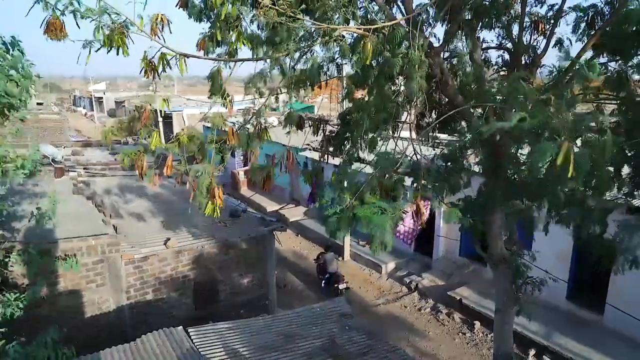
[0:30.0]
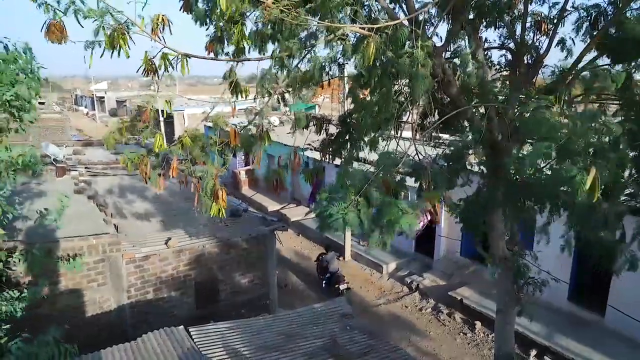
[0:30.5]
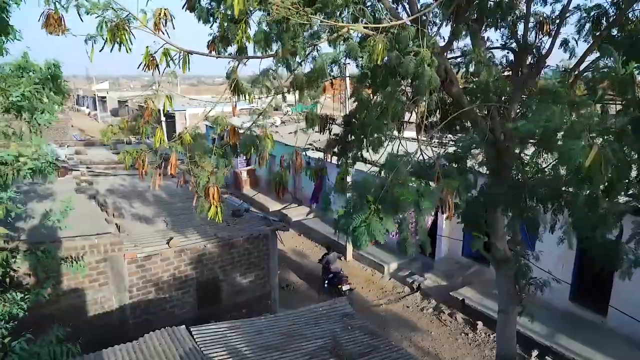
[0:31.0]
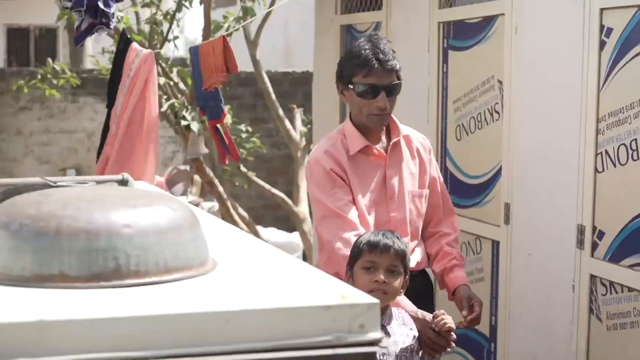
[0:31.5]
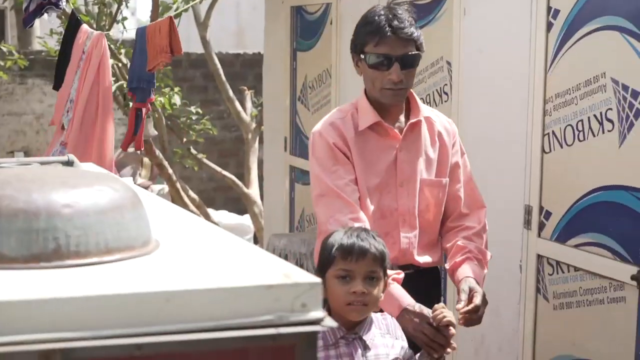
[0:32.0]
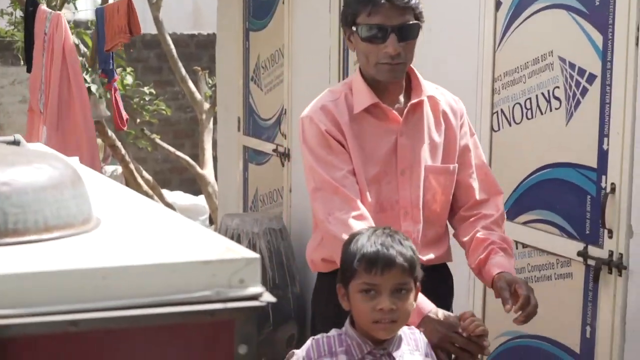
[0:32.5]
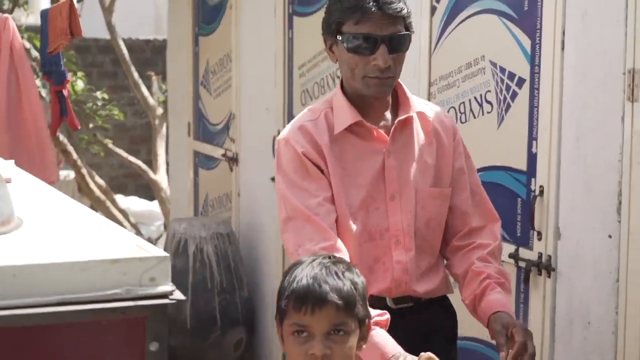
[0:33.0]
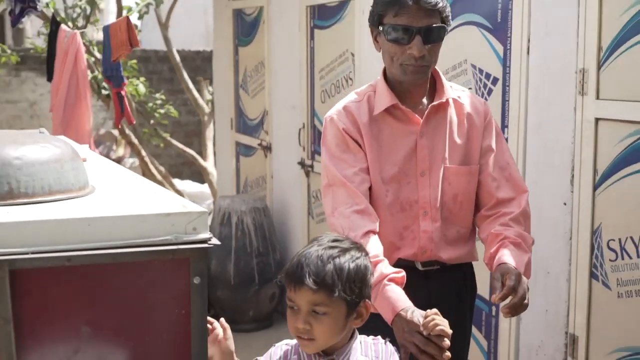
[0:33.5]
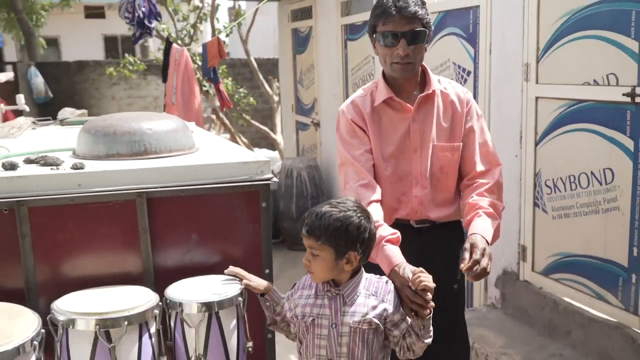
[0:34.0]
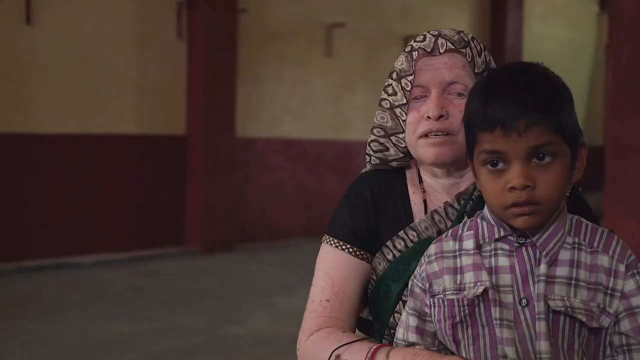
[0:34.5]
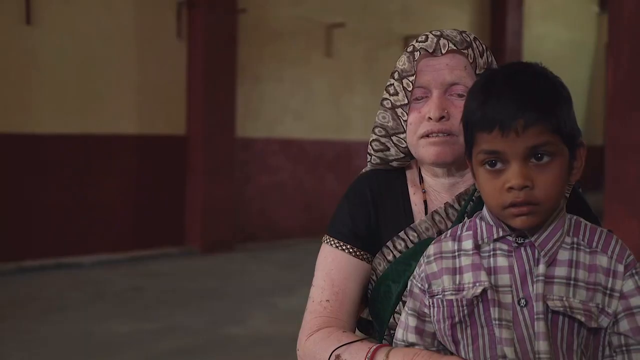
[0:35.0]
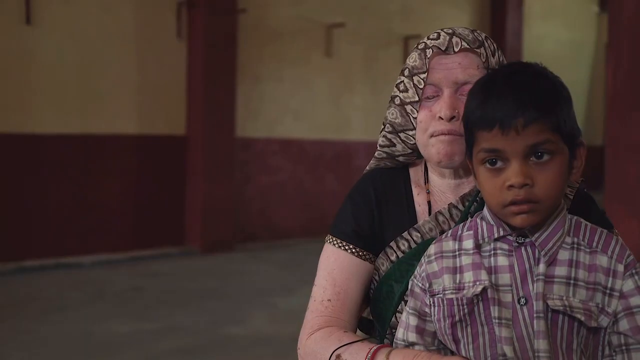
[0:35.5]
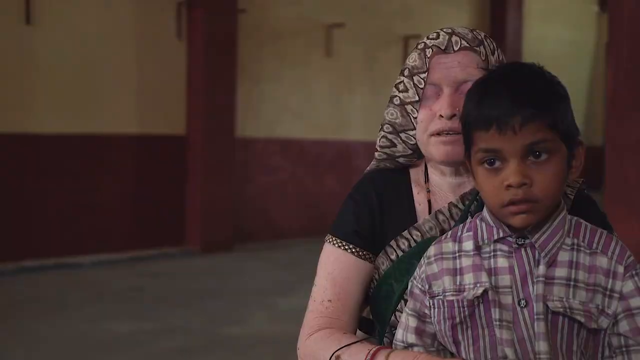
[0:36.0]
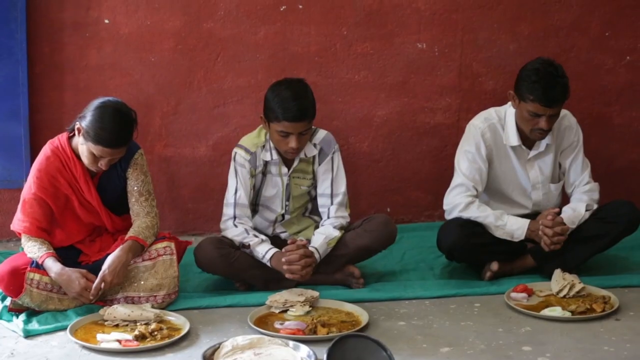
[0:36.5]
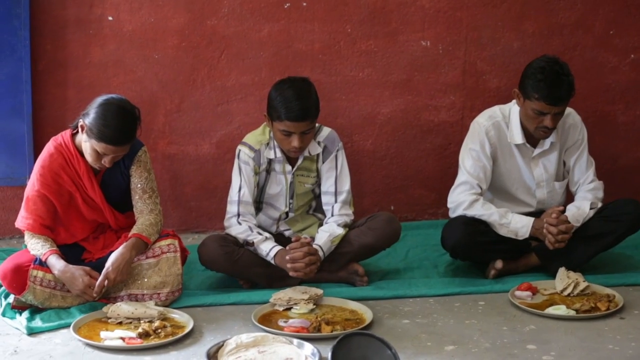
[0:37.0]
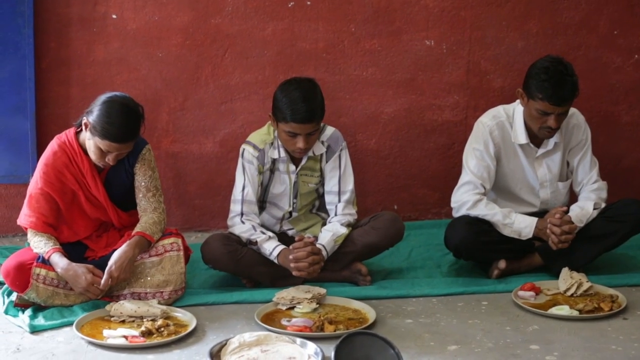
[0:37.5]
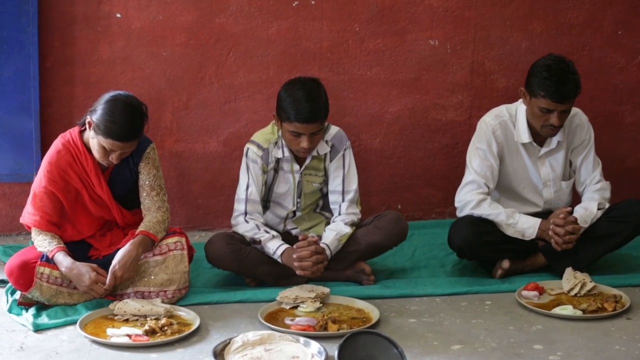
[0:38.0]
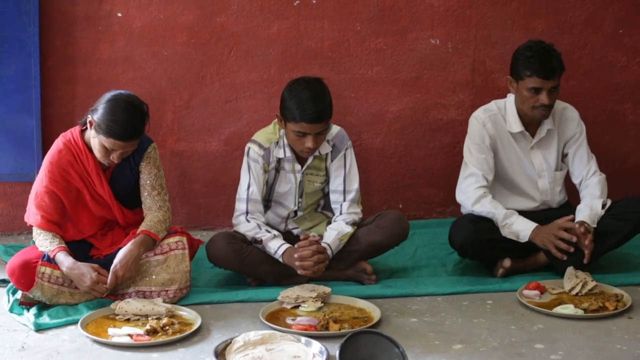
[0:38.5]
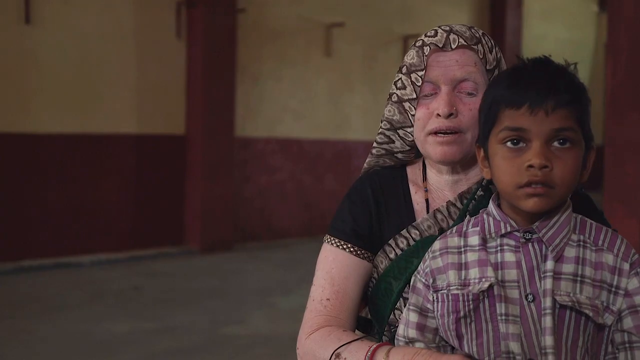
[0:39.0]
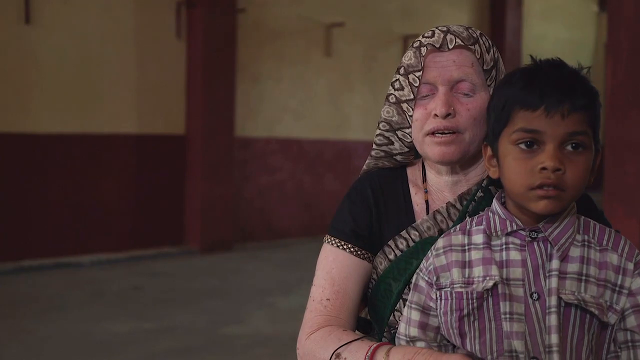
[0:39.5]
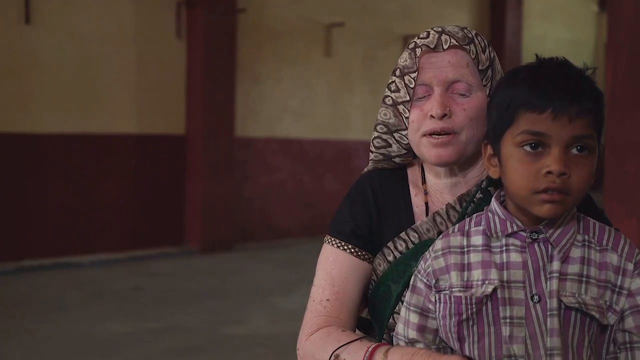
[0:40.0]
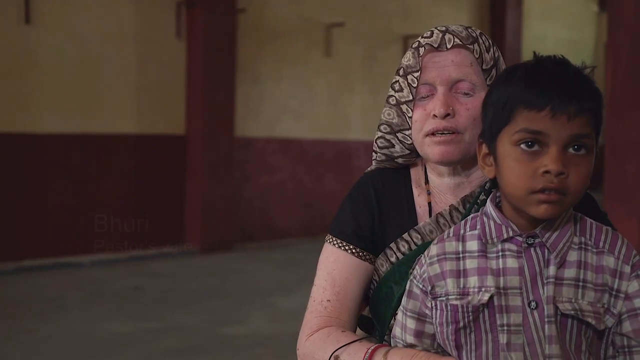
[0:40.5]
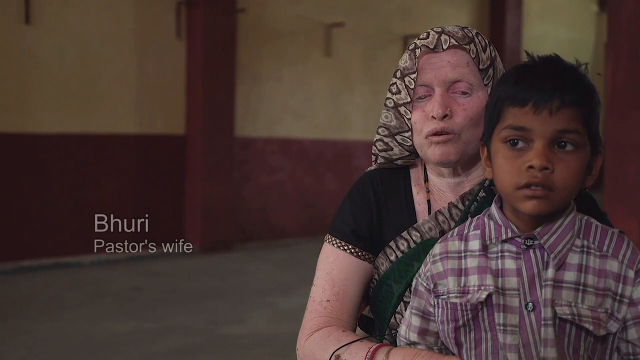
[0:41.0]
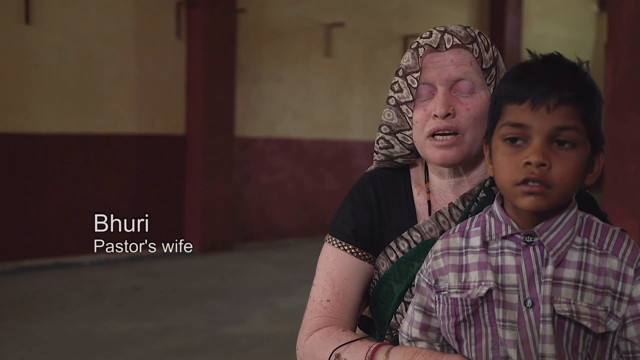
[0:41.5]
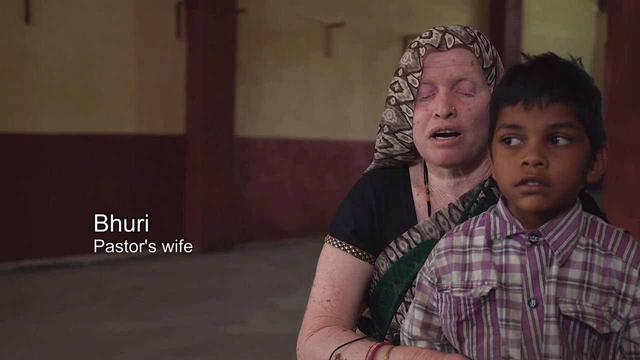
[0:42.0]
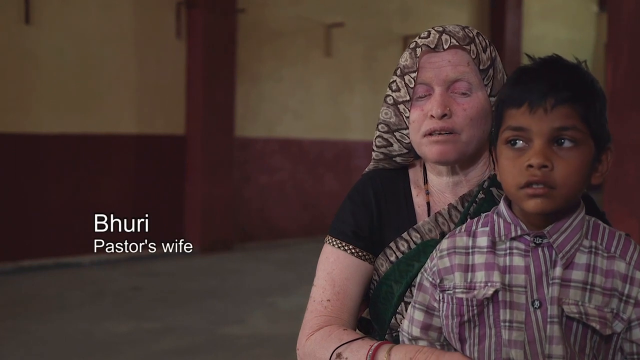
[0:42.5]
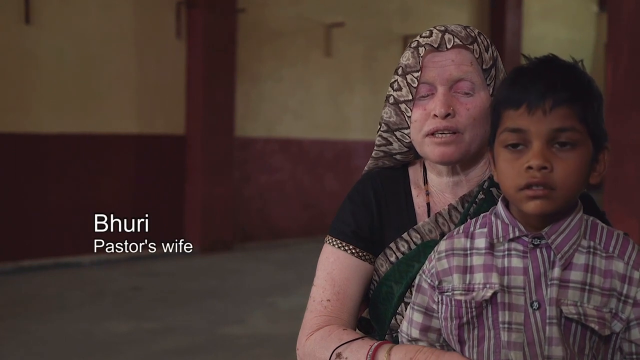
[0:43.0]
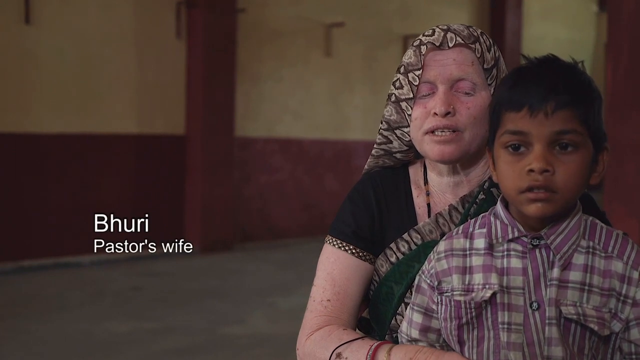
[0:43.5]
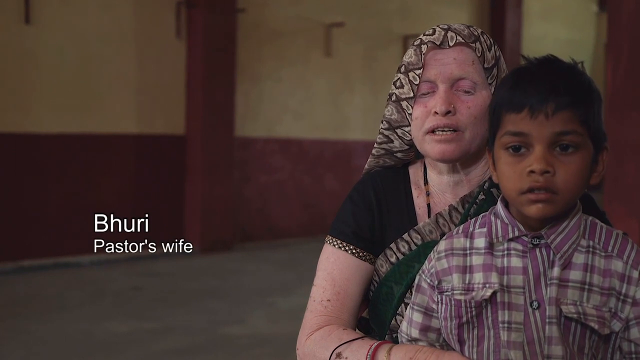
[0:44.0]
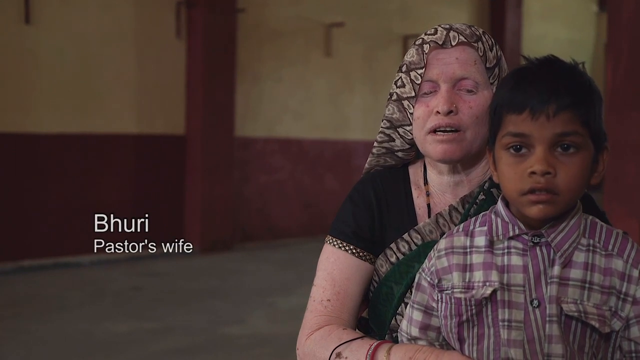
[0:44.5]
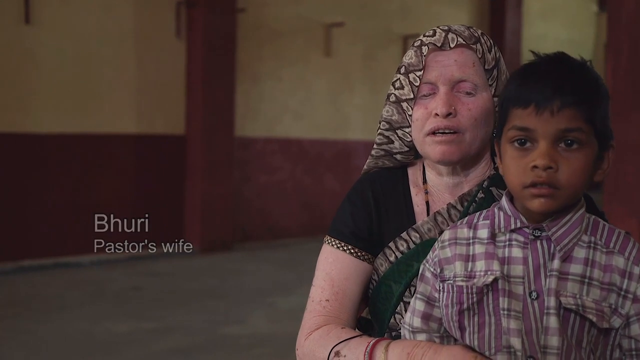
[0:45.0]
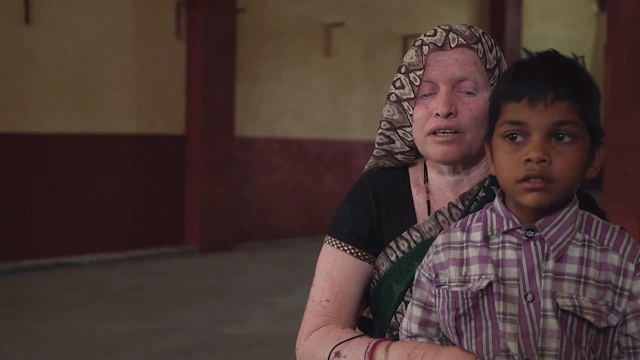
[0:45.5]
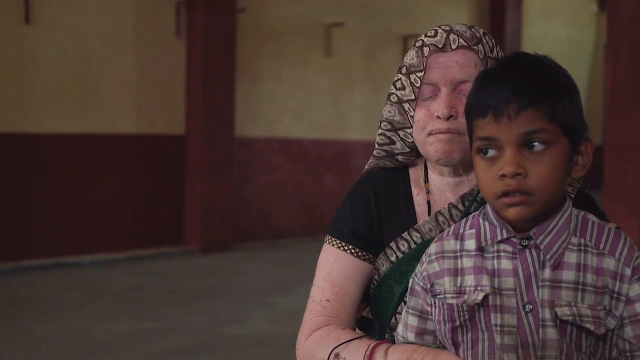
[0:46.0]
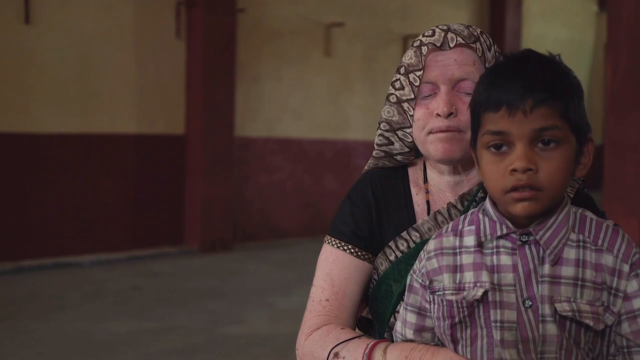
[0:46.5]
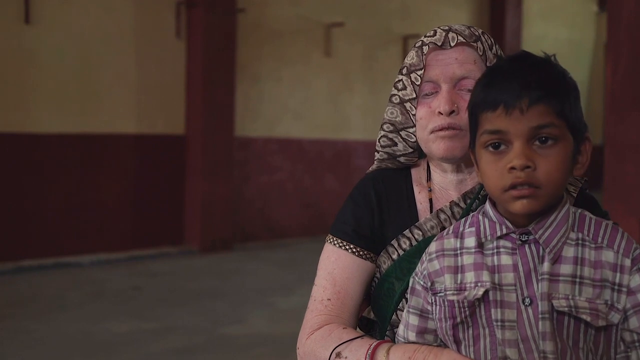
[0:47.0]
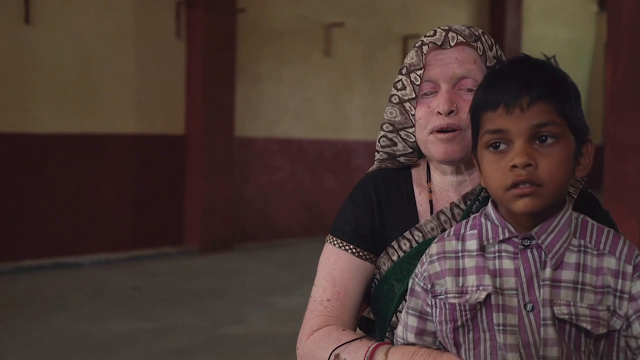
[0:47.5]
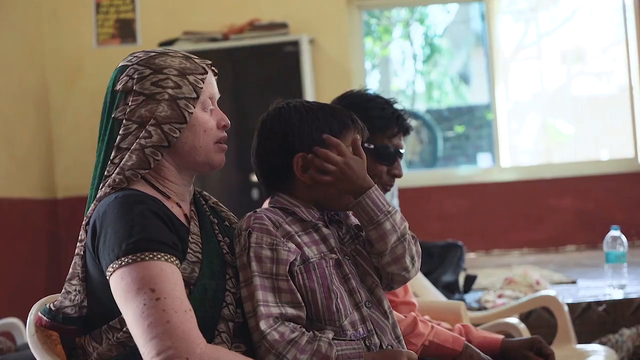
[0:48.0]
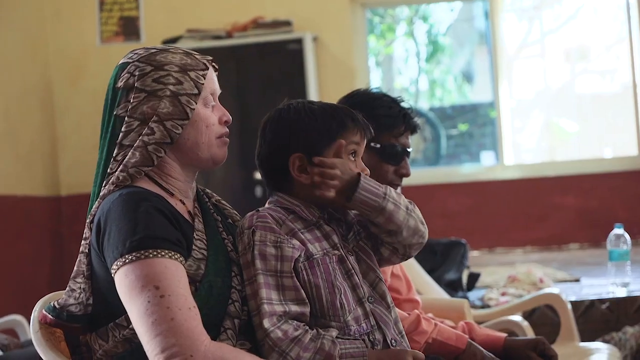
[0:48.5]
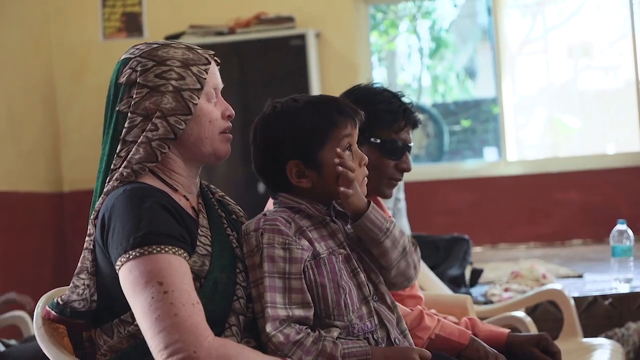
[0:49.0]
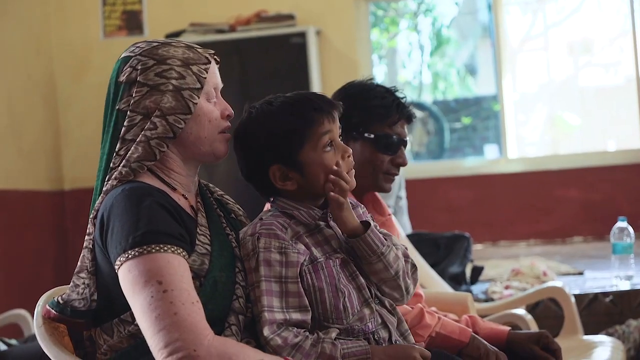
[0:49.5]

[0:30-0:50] The dwellings and the dirt walkway with the person on the motorcycle are shown. In a different shot, the man in the salmon shirt and glasses is led by the younger child seen earlier. There look to be clothes hanging on a line behind them as they walk by some buildings, and there is maybe an upside-down hammered aluminum pan in one section. The little boy continues to walk the man along. In a new shot, the little boy sits in the pale woman's lap; she may have vitiligo. They are inside a building with red columns, red on the bottom and a more cream-white color on top. She talks a little. Next, three younger people, the middle one maybe younger and the other two older, sit cross-legged on the ground in front of what seem to be plates. They all seem to be wearing pants and button-up shirts and are barefoot, and the woman wears a red sarong. The wall is red with blue accents. The scene returns to the pale woman talking with the young child, and on-screen information pops up identifying her as a wife. Then a side shot shows her, the child, and the blind man with the glasses.